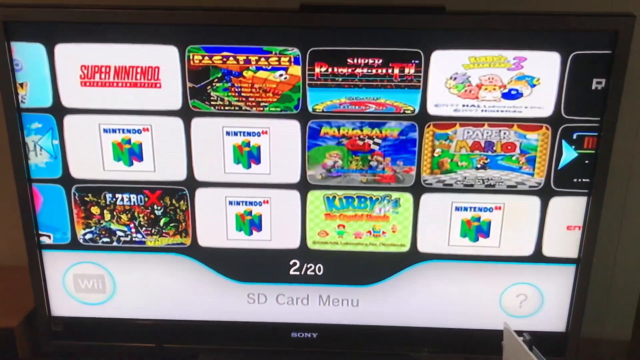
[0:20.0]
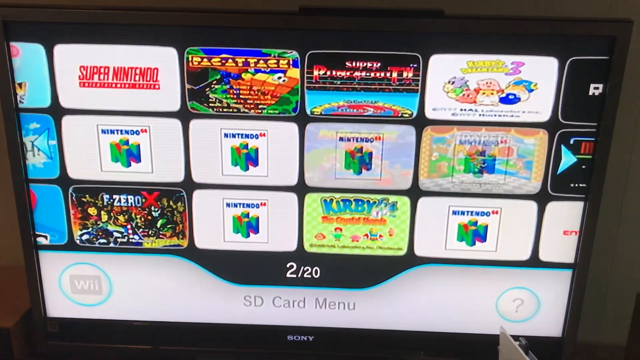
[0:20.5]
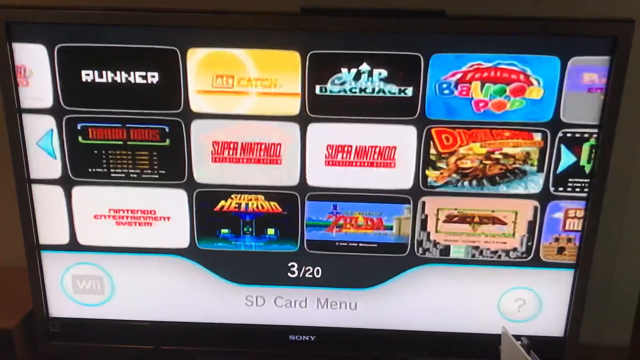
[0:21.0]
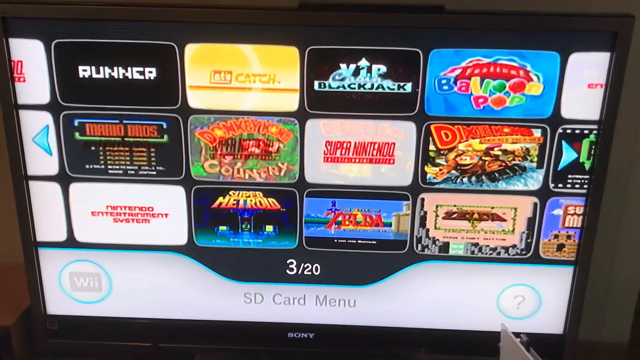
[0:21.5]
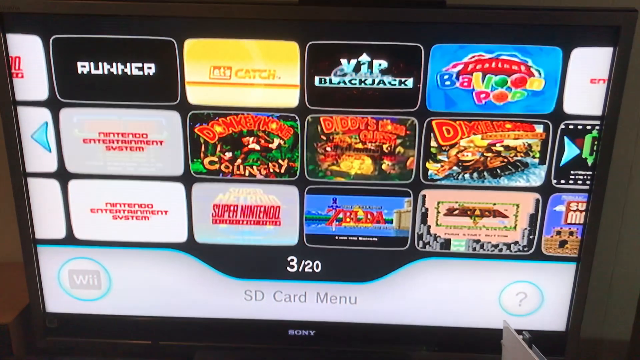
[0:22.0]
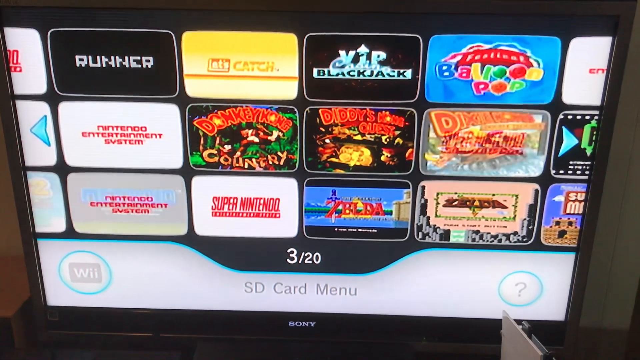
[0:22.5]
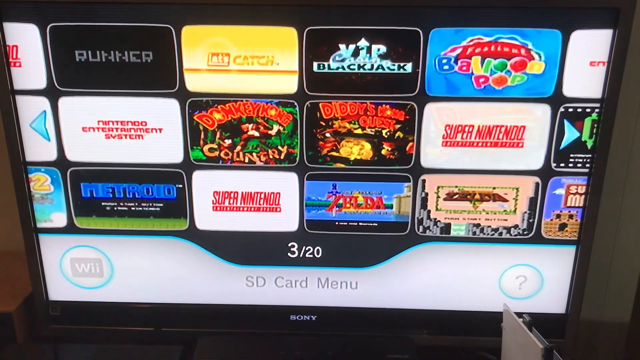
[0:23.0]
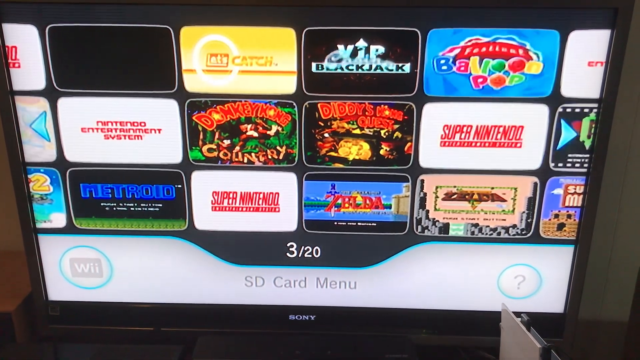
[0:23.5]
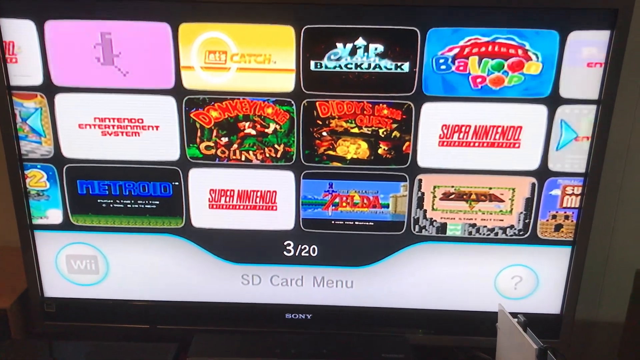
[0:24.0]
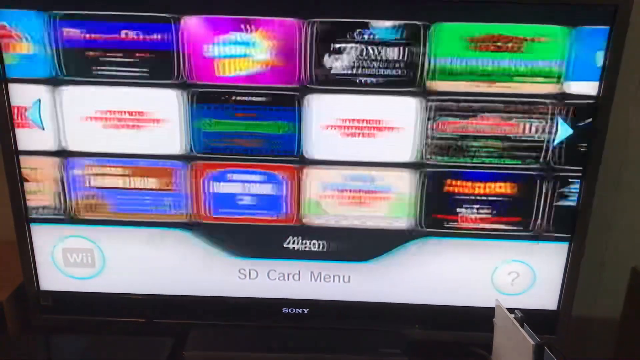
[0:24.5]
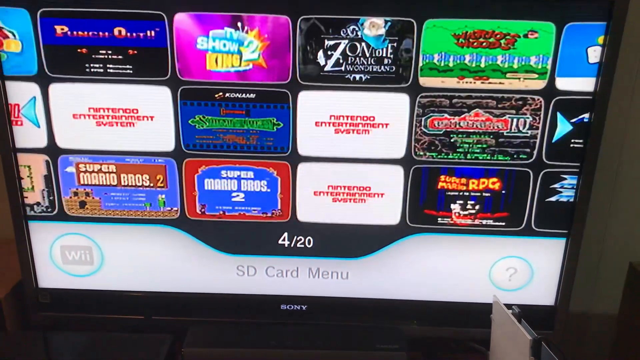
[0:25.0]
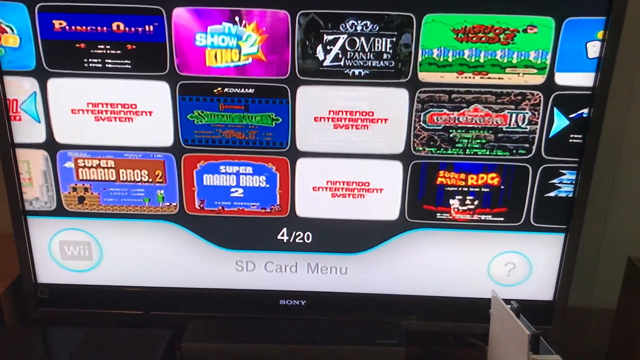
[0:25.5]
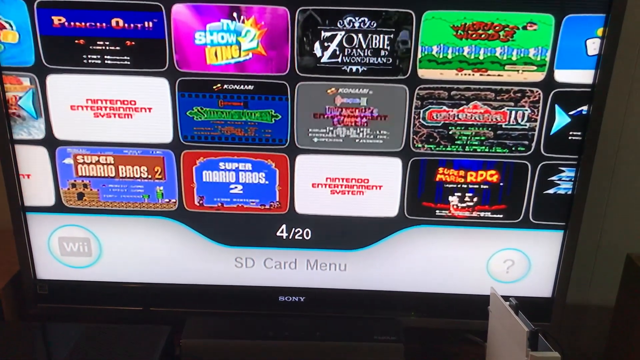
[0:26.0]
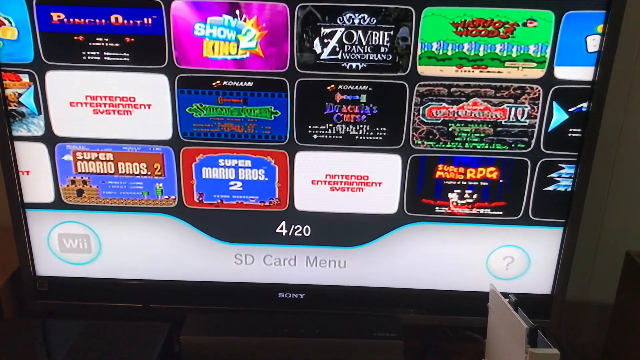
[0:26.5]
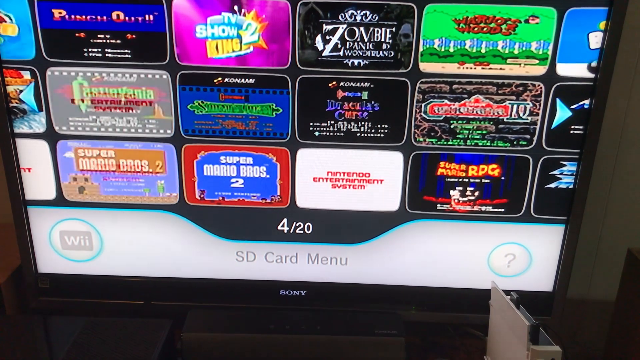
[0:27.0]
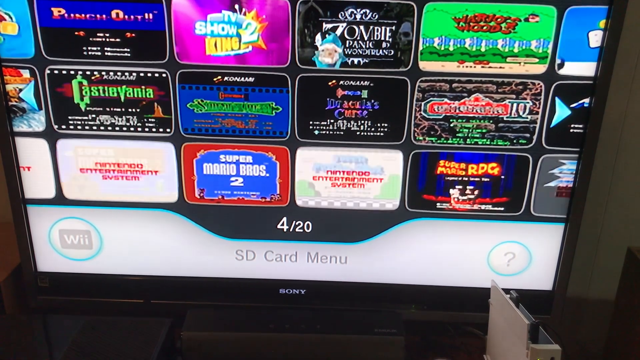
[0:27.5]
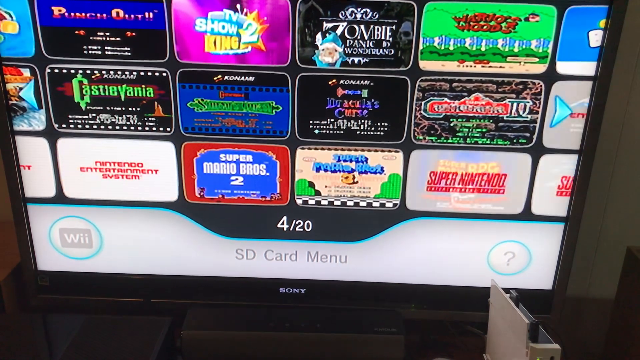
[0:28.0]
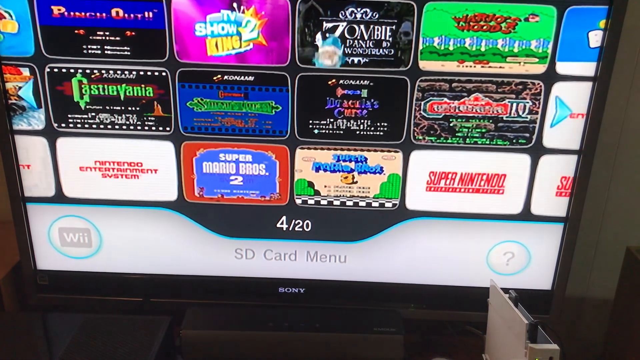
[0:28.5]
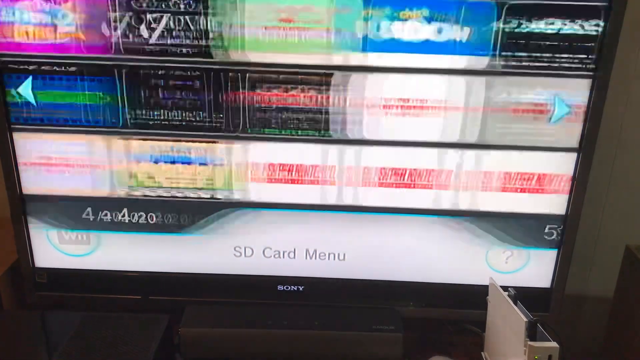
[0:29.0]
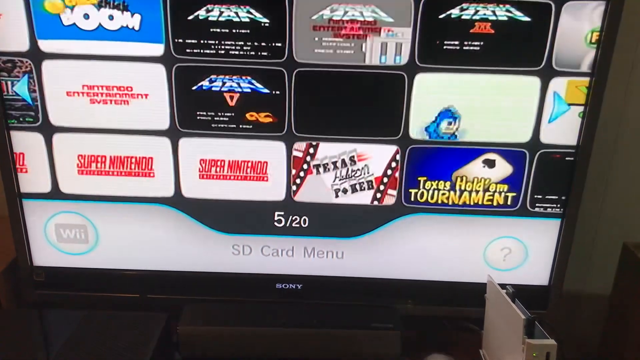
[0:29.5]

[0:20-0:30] Multiple different games are shown, including Balloon Pop, as the menu scrolls; there appear to be 20 different screens. It goes from menu one up to menu five. A second screen opens, and small rectangular boxes flash up with different games in them. Some look like current games and some like games from the past: Paper Mario, Pac-Man, something "three," Kirby, F-Zero X and Nintendo. There are three Nintendo slots. The third screen shows Runner, VIP, Blackjack, Balloon Pop and Super Nintendo; two Super Nintendos are visible. Another small screen looks like Nintendo Entertainment System. At the very top there are four distinct areas containing the games.